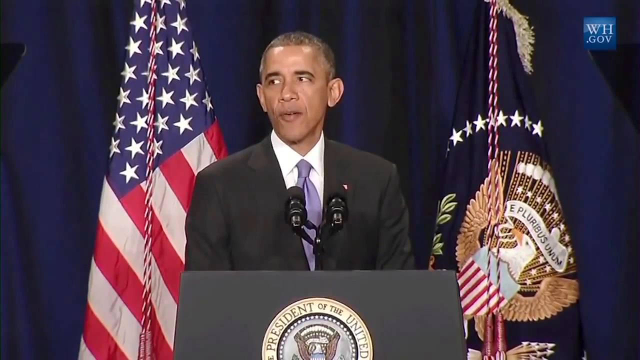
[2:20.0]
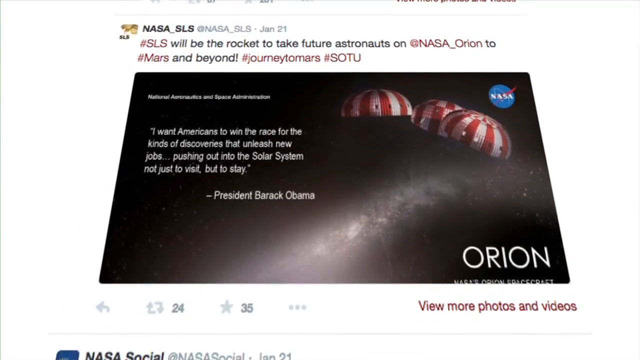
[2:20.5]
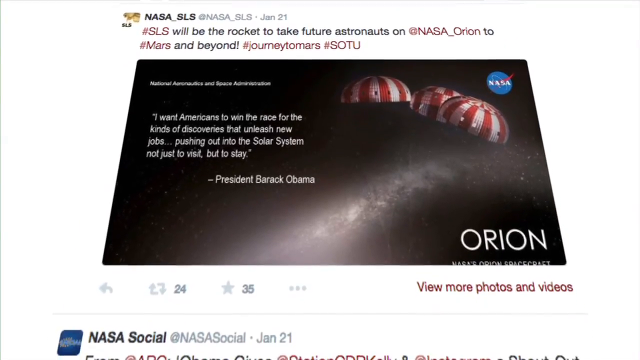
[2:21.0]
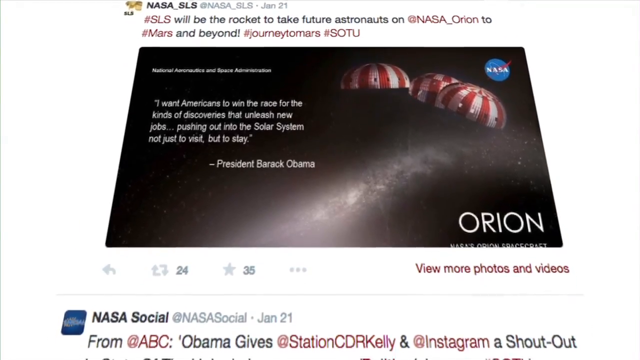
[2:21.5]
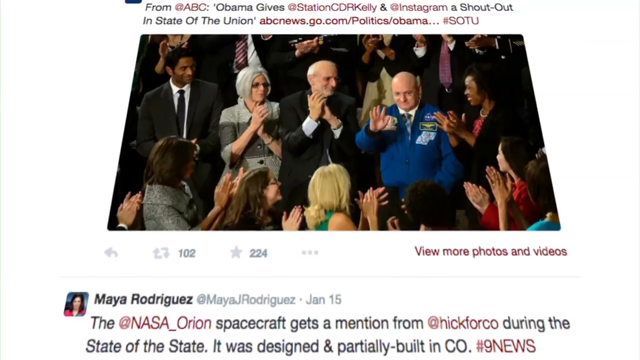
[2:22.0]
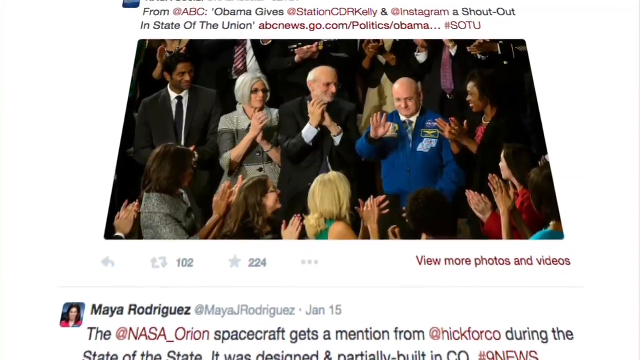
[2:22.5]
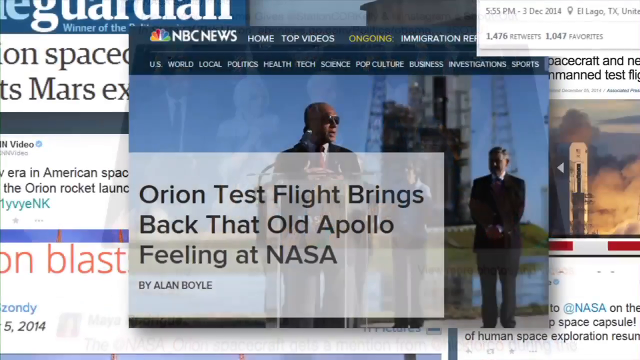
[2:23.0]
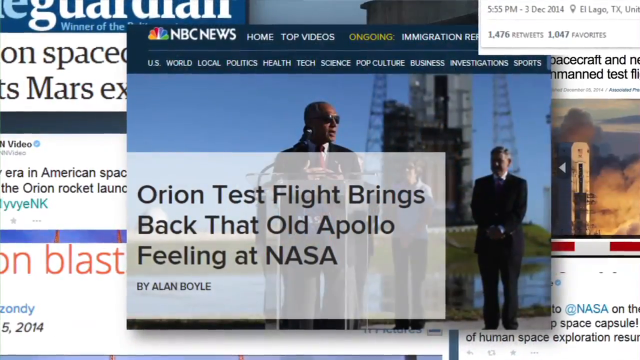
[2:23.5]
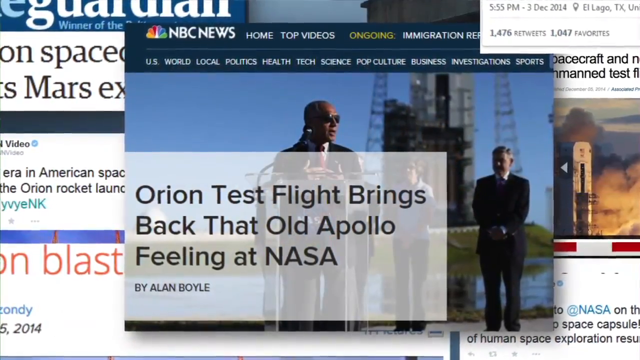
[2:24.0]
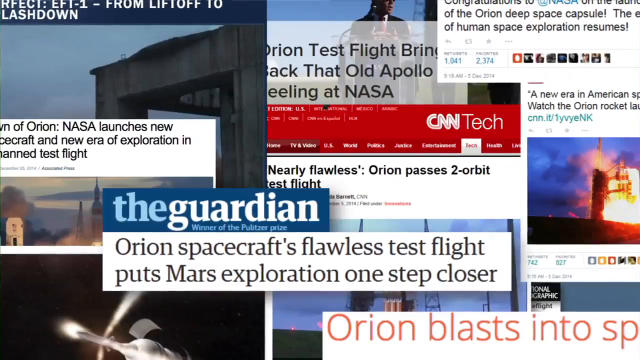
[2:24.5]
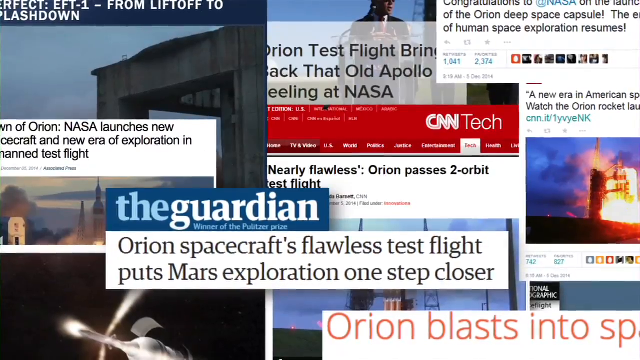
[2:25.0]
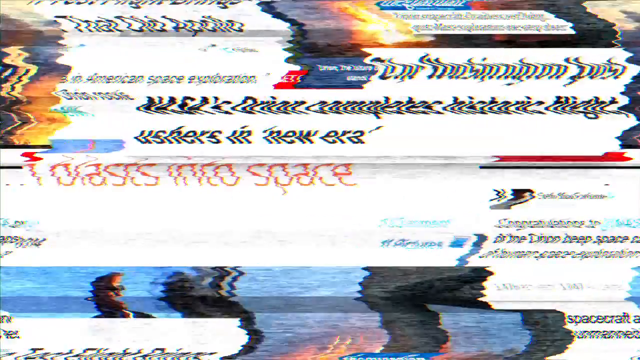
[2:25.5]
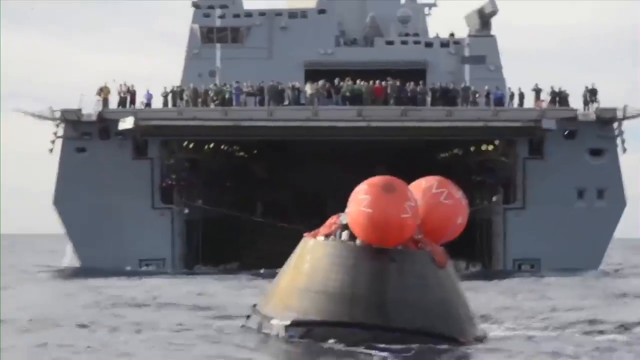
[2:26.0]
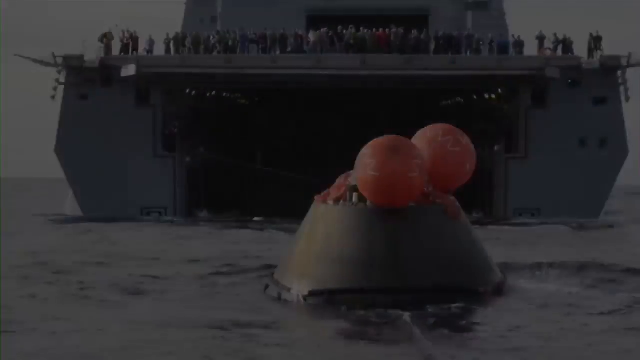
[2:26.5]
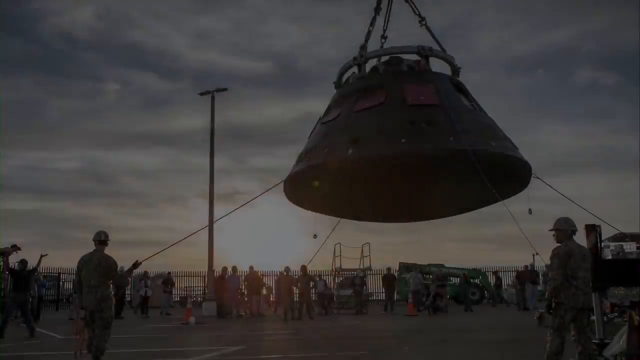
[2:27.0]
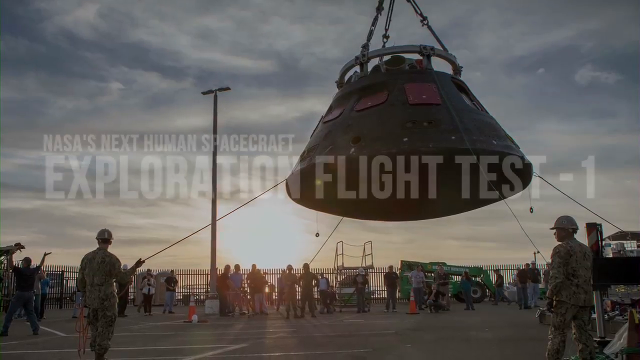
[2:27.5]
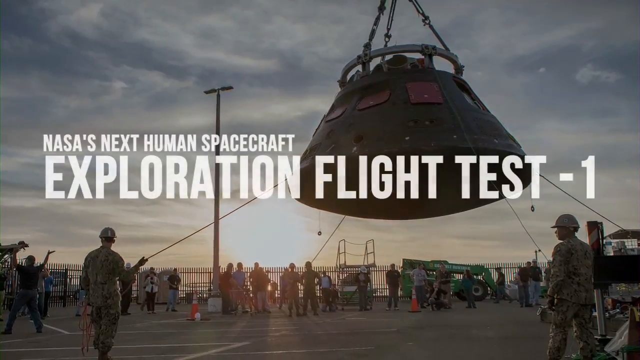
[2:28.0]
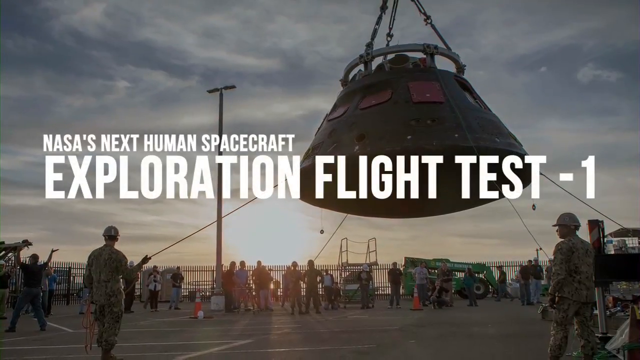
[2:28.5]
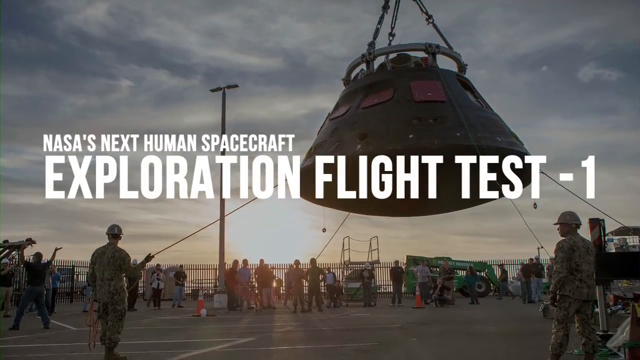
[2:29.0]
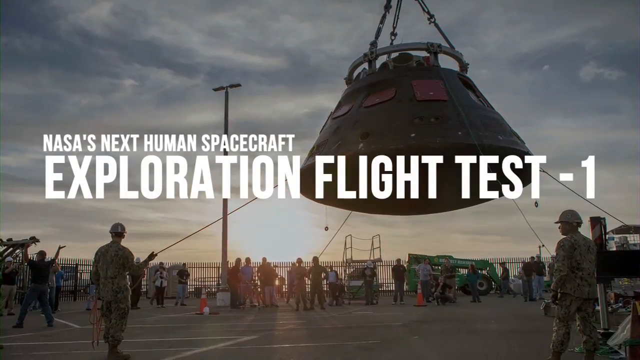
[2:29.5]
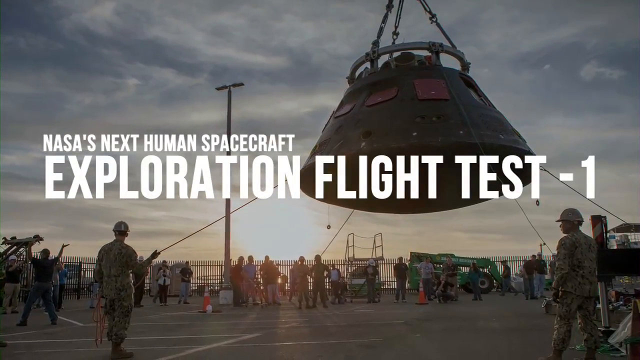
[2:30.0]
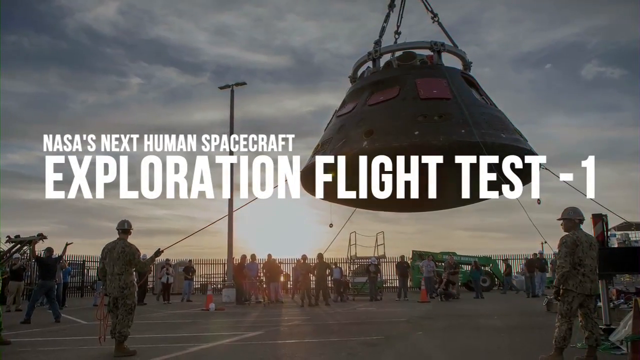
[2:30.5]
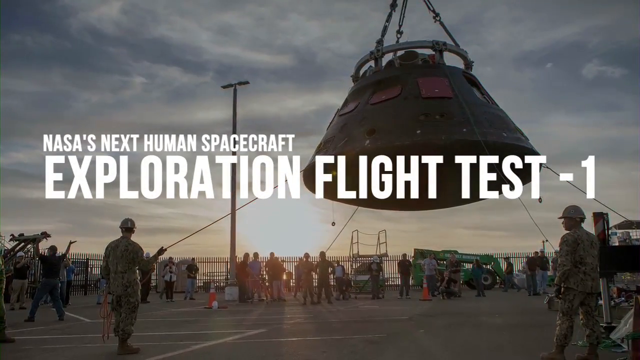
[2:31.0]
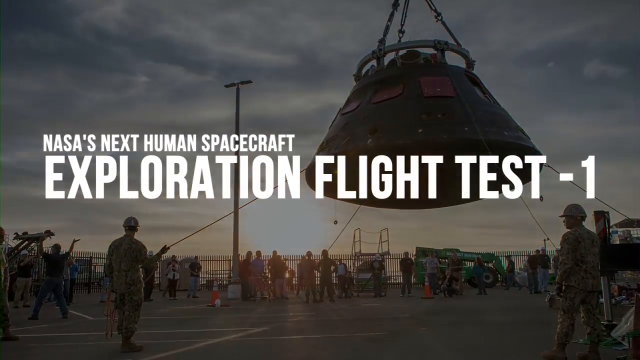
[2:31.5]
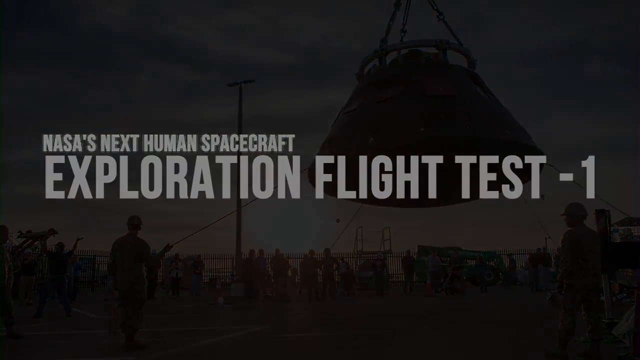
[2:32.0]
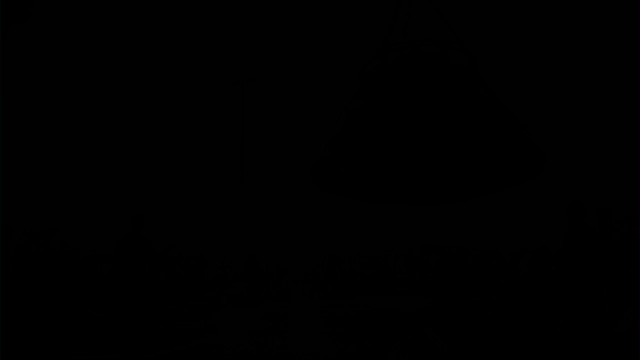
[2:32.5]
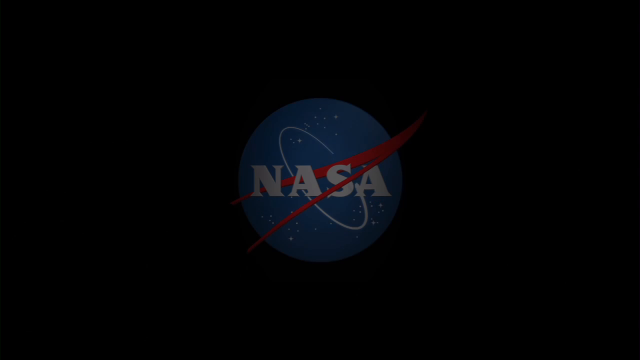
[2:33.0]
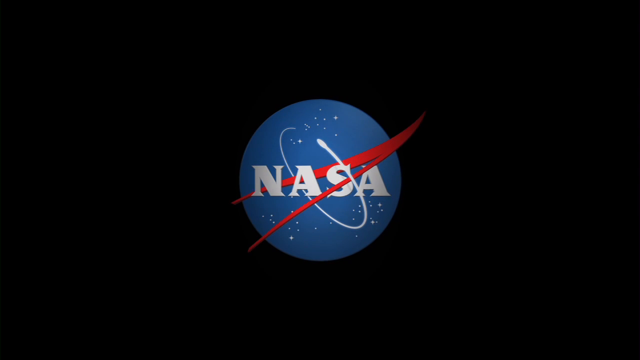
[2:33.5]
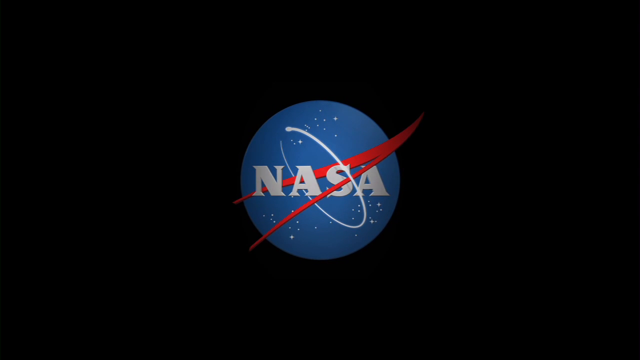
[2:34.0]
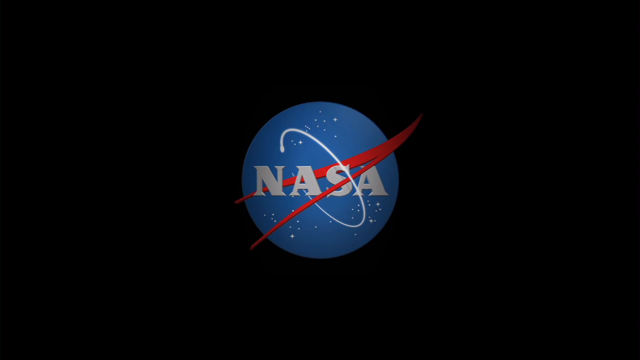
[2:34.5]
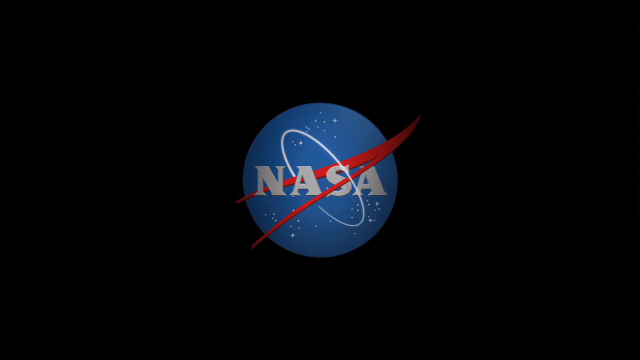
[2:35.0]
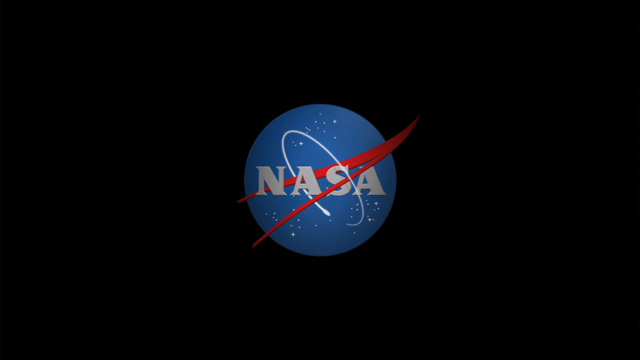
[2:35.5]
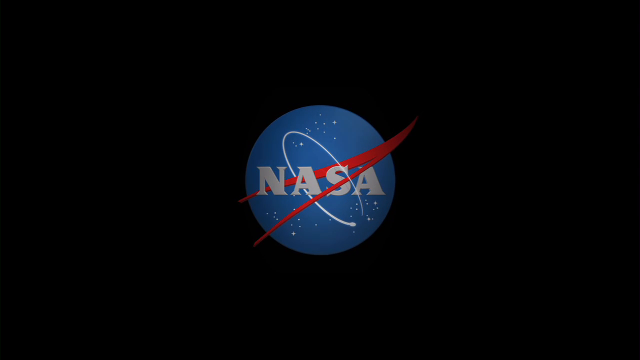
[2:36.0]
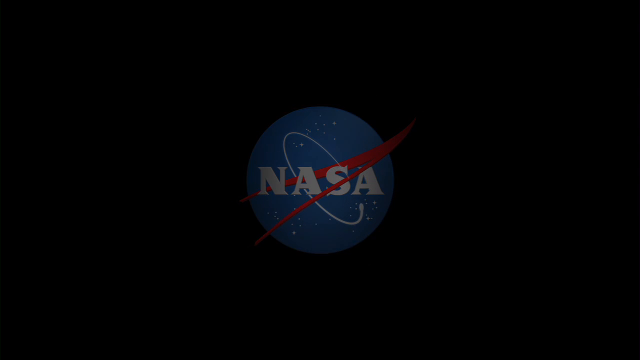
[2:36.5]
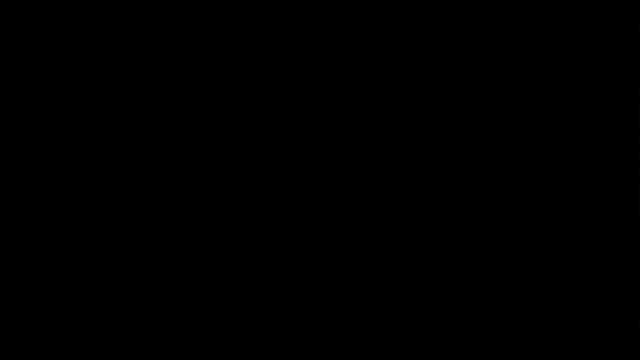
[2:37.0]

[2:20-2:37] President Obama stands at a podium giving a speech, with the American flag to his left. A slide then shows a quote from him: "I want Americans to win the race for the kinds of discoveries that unleash new jobs, pushing out into the solar system, not just to visit but to stay", which then disappears. An image shows a group of people clapping. Various online news articles from the time follow: one from NBC News reading "Orion test flight brings back that old Apollo feeling at NASA", one from the Guardian reading "Orion spacecraft's flawless test flight puts Mars exploration one step closer", and one from CNN Tech reading "nearly flawless, Orion passes two-orbit test flight". A close-up of the ship that collected the heat shield shows a large area at the back of the ship that allows the buoy to be pulled in. It is then lowered onto land by a crane. A sign reads "NASA's next human spacecraft exploration flight test one", and the NASA logo appears at the very end of the video.